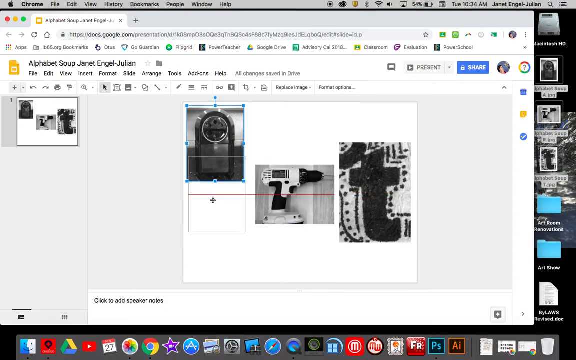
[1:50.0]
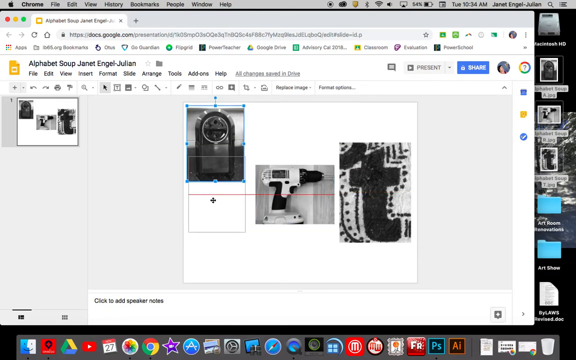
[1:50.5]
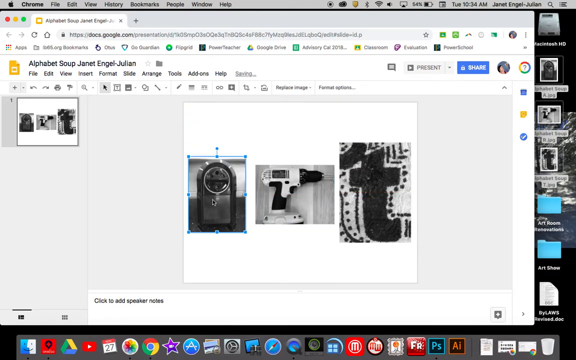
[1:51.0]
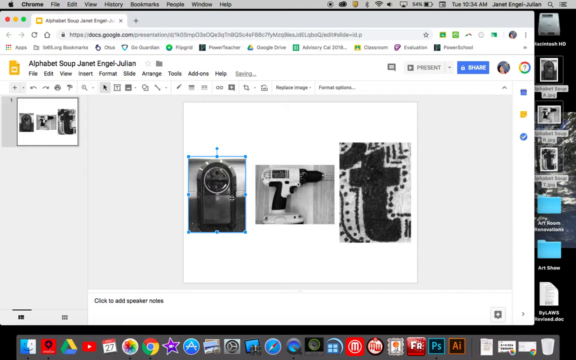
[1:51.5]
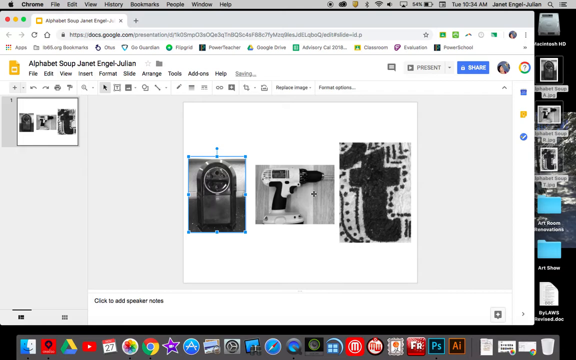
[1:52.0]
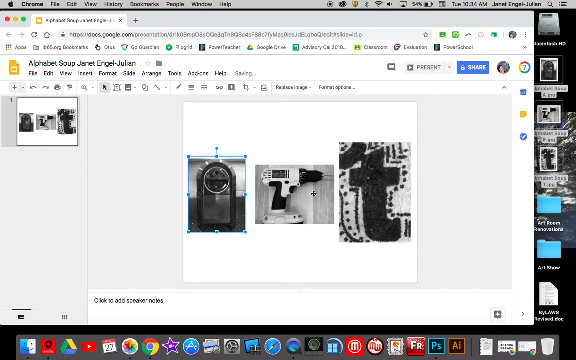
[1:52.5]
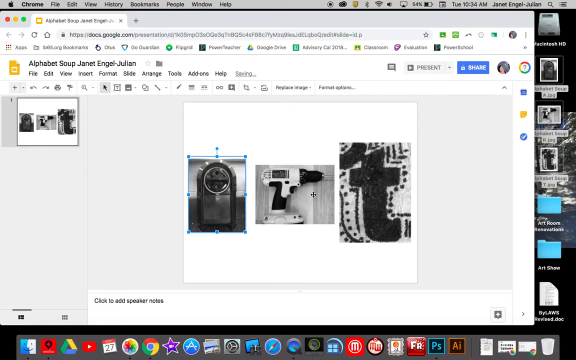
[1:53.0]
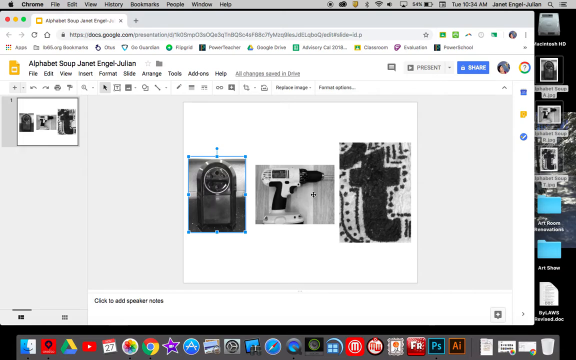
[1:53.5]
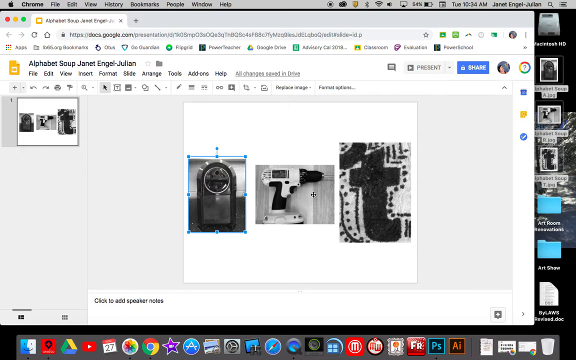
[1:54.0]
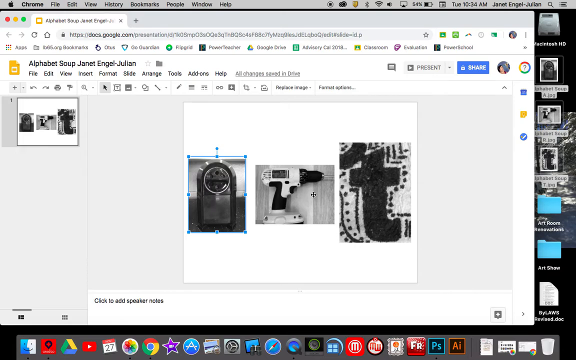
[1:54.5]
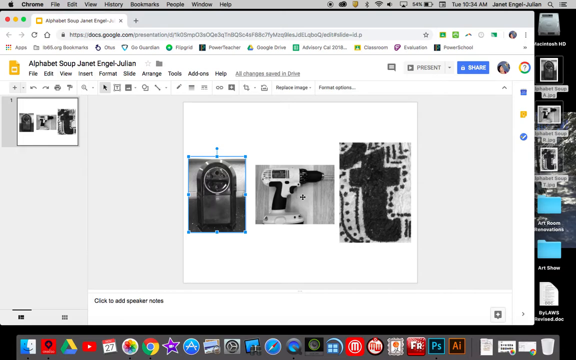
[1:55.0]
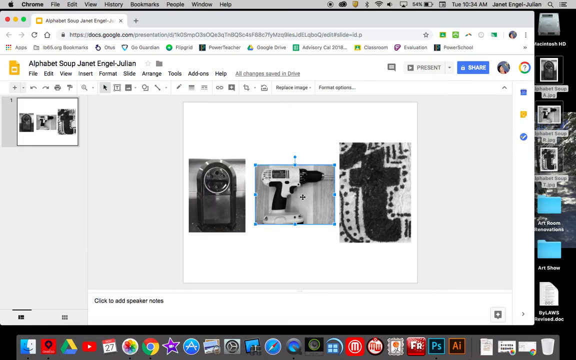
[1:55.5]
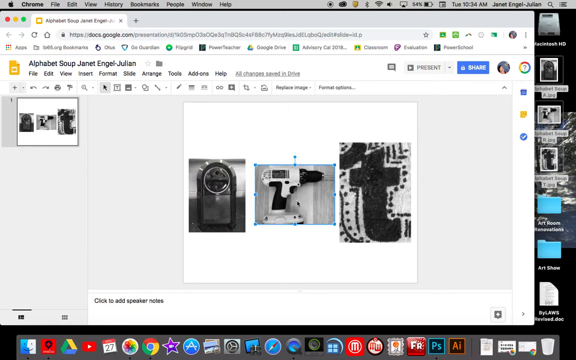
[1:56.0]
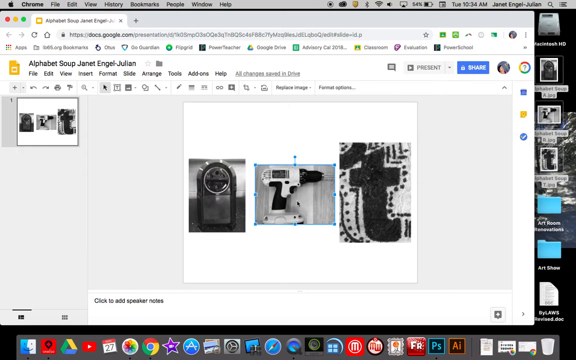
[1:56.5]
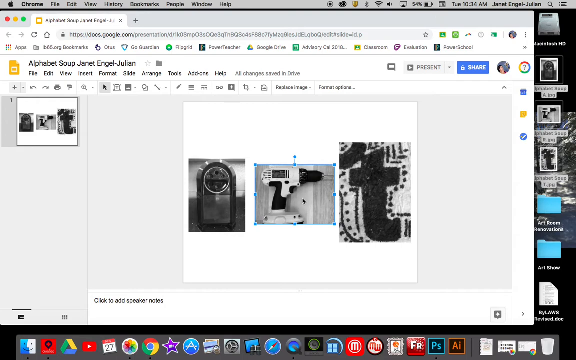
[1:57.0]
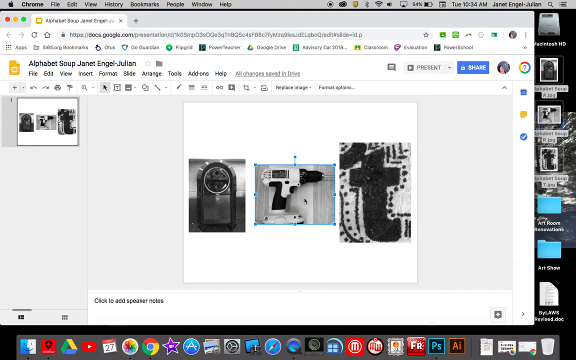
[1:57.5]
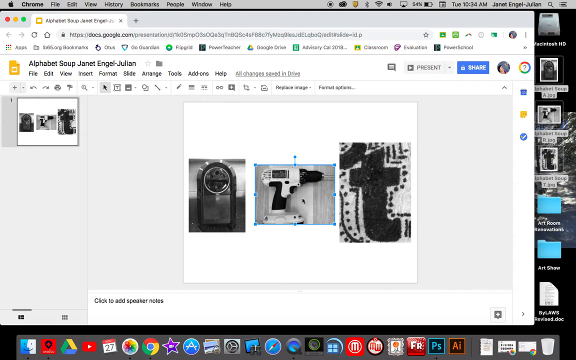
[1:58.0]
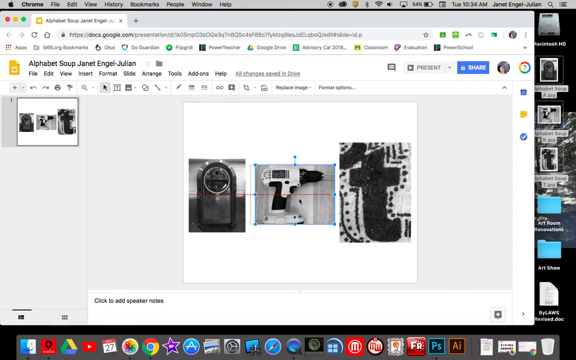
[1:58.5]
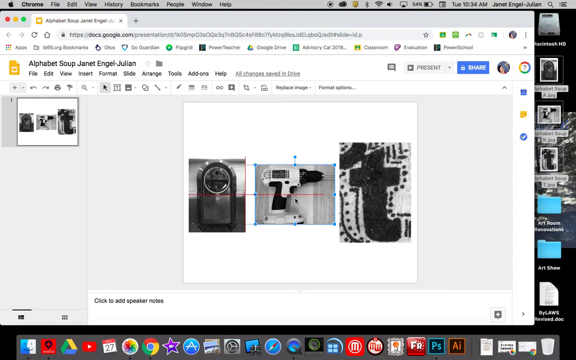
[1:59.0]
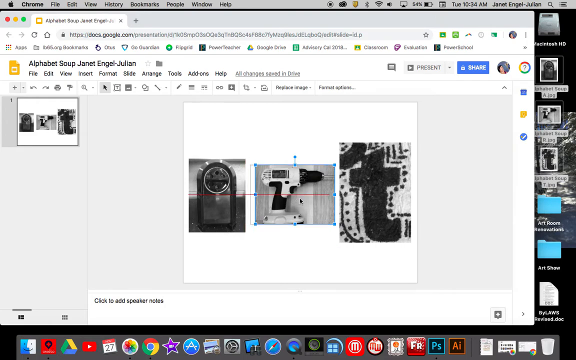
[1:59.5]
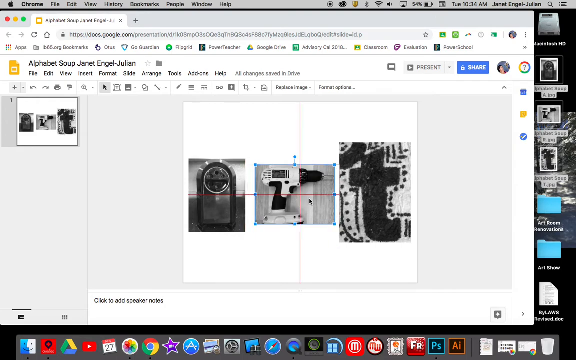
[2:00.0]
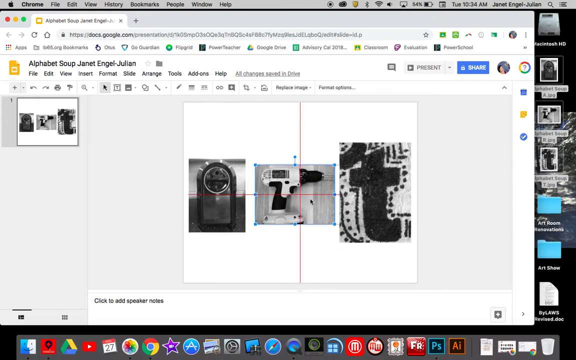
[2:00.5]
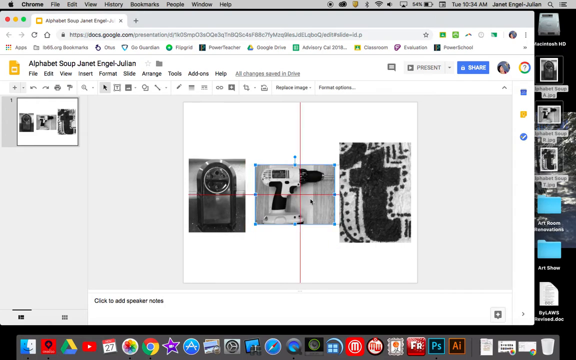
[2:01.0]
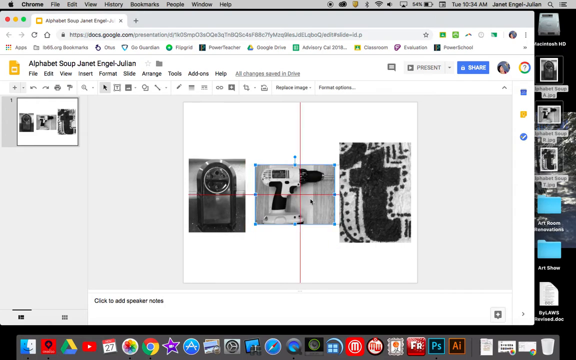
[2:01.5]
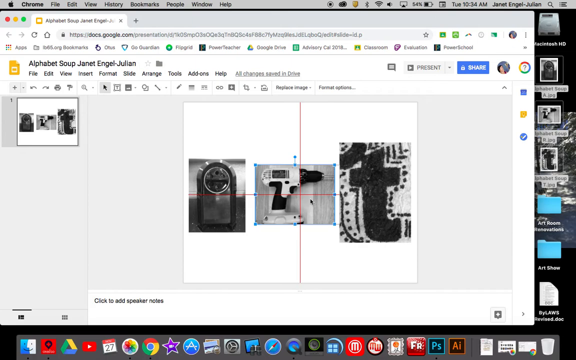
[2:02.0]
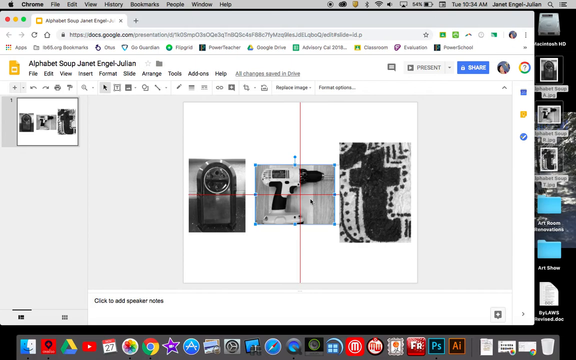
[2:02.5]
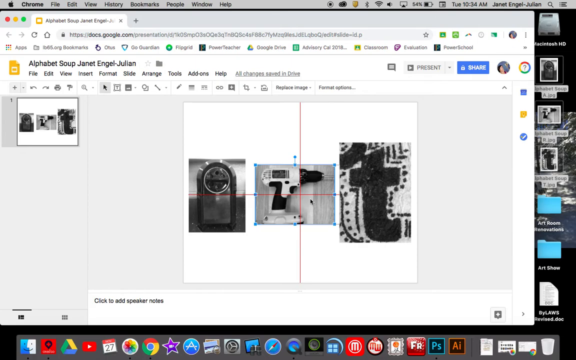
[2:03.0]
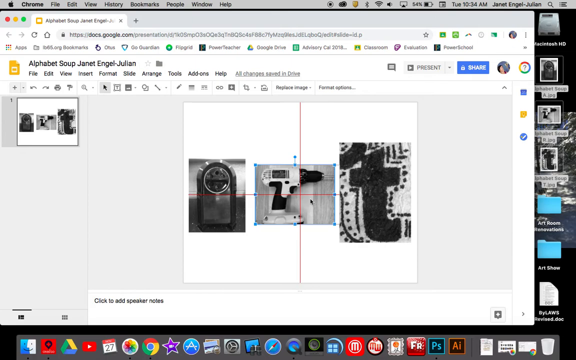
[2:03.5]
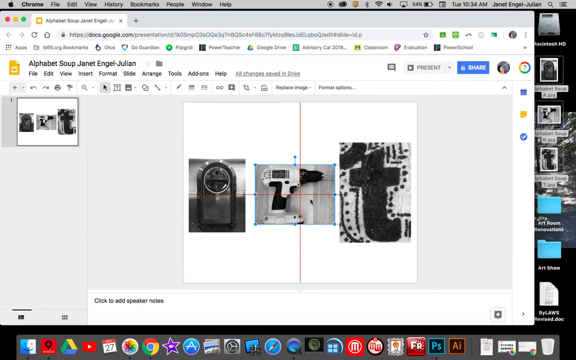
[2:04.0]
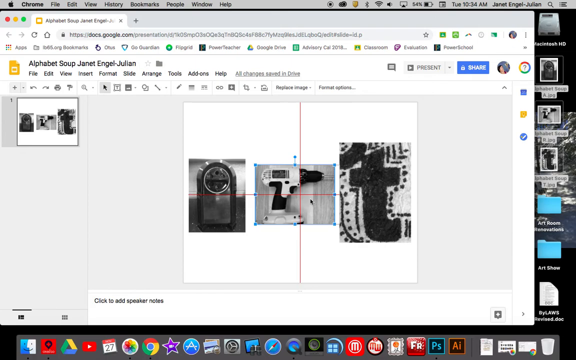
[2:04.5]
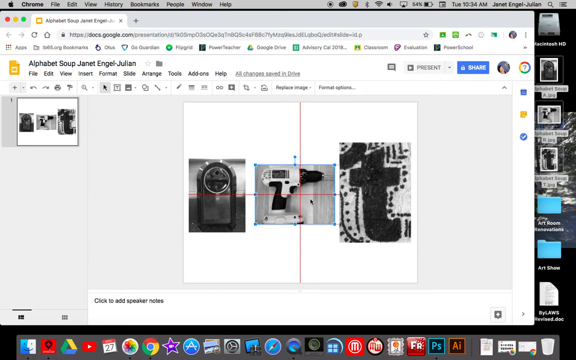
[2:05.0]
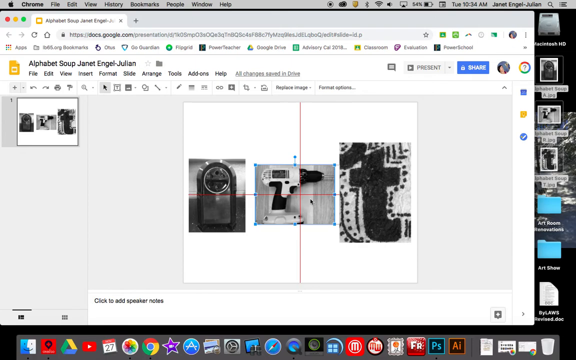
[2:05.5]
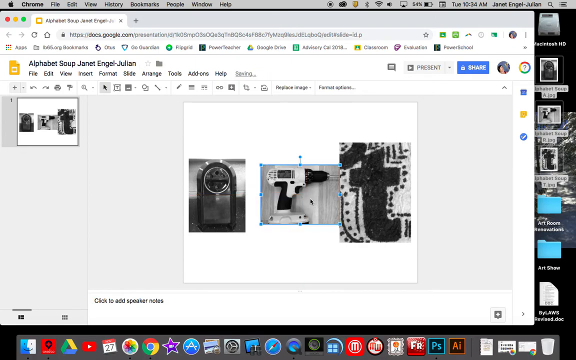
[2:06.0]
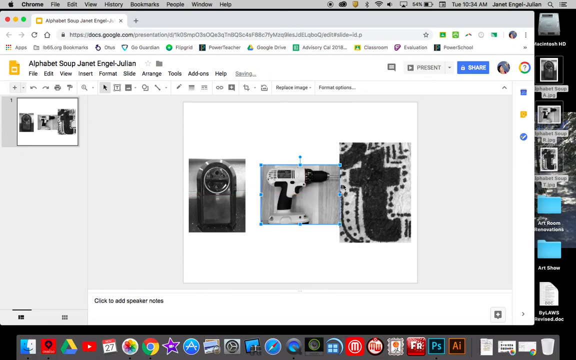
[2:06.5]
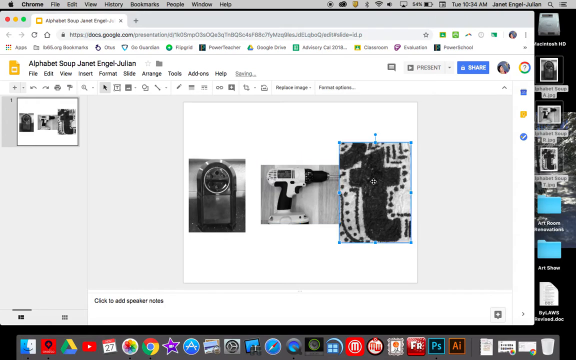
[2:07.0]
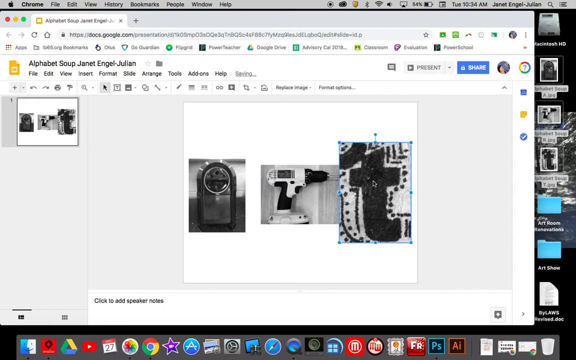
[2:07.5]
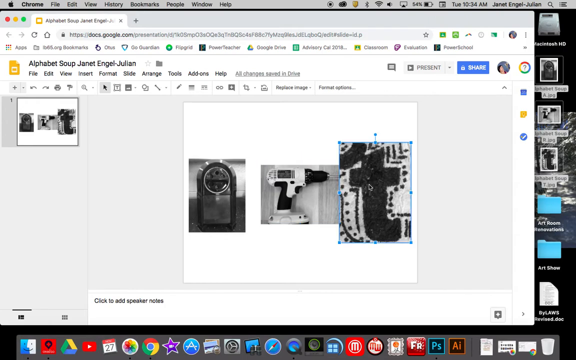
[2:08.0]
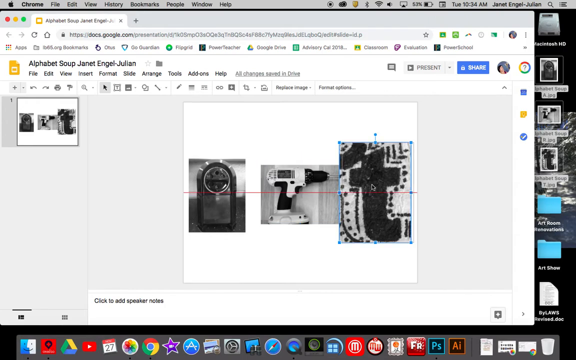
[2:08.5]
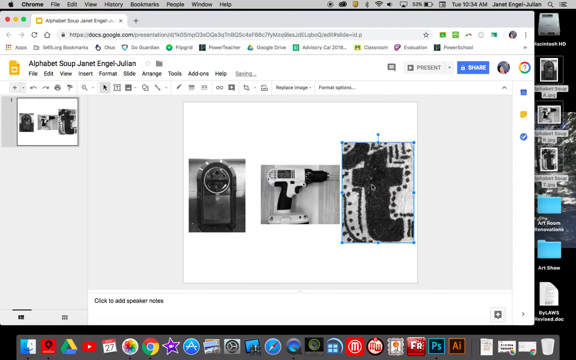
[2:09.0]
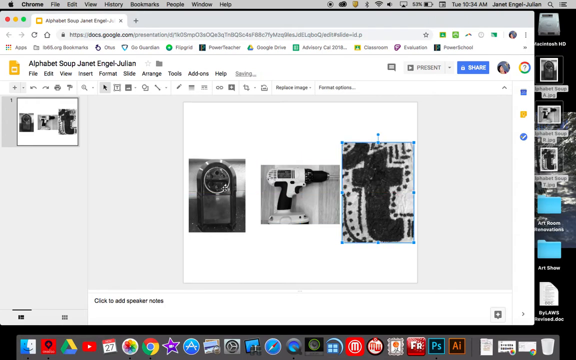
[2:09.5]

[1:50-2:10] A Google Chrome browser on an Apple device shows Google Docs with a white screen and a page titled "Alphabet Soup, Jeanette, Engel, Julian". Three images have been lined up at the same height, centered, as indicated by a horizontal red line that appears when an image is centered on the screen. The image on the far left has a light blue border showing it is selected. The user drags the mouse right, hovers over the second image and selects it, so the light blue box disappears from the first image and appears over the second. The user clicks the image, drags it to the left and back to the same spot, and on deselecting, it moves a few places to the right. The user clicks the third image, so the light blue border leaves the second image and appears around the third, drags it very slightly to the right, then moves the mouse back left to click the first image again.